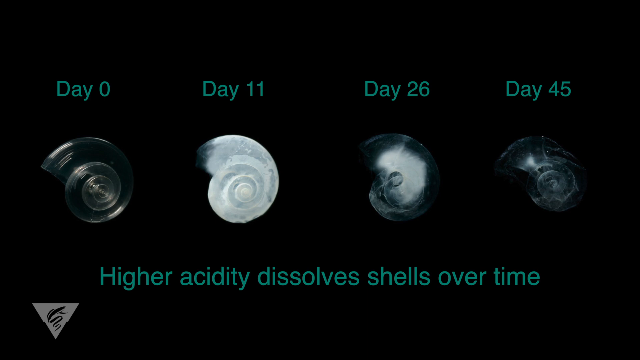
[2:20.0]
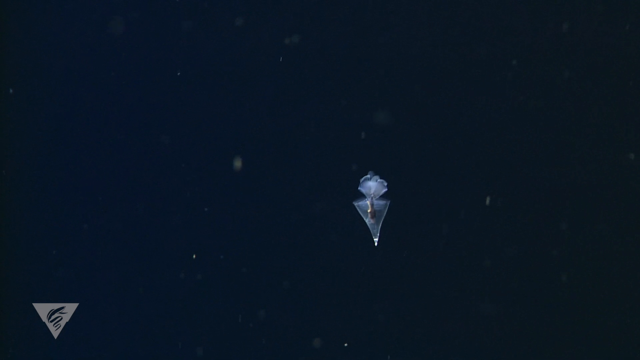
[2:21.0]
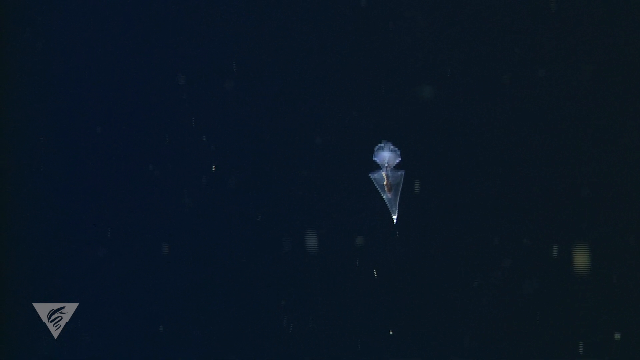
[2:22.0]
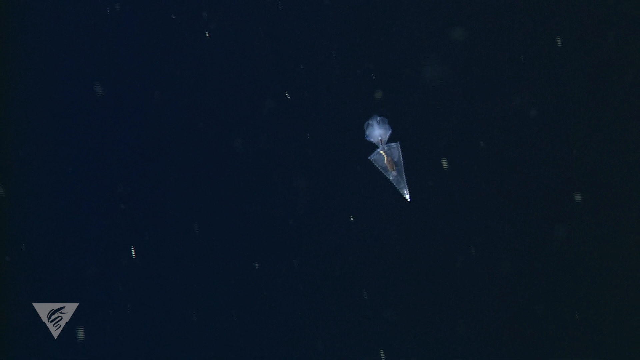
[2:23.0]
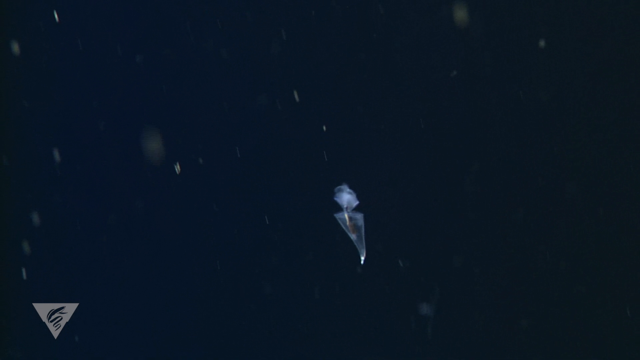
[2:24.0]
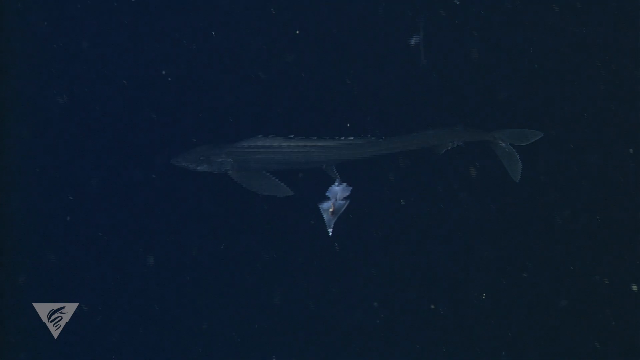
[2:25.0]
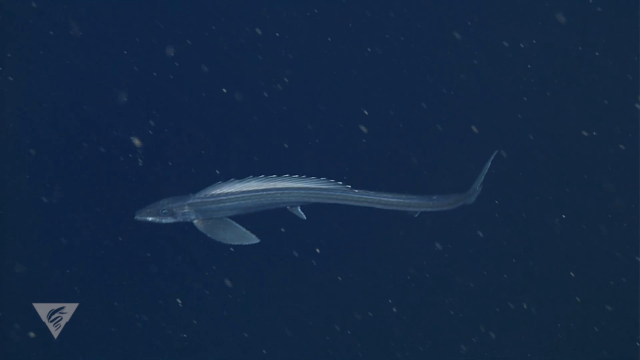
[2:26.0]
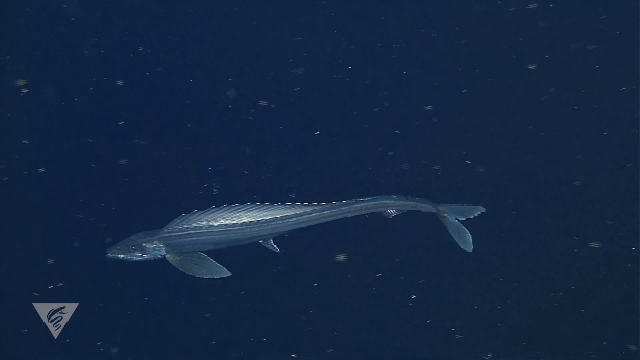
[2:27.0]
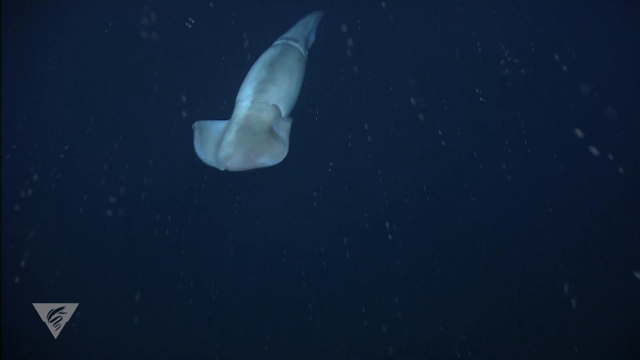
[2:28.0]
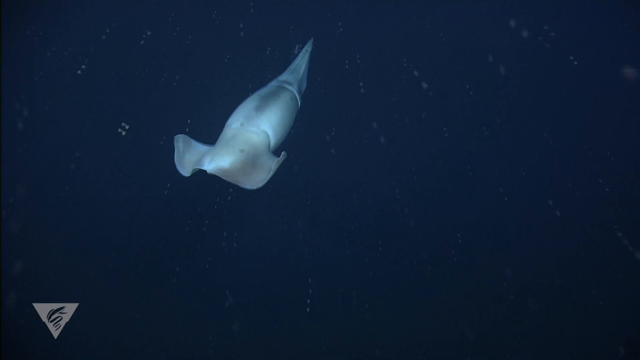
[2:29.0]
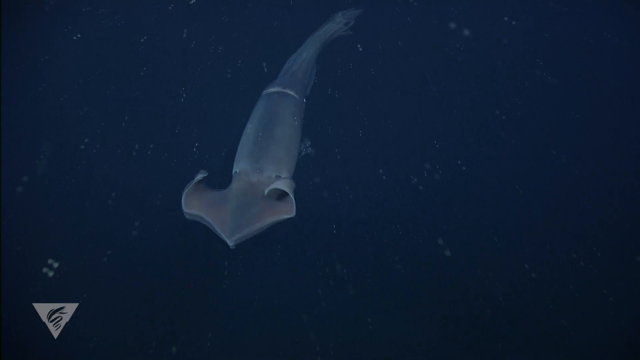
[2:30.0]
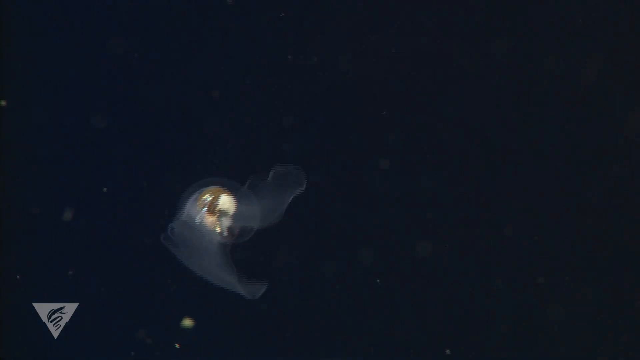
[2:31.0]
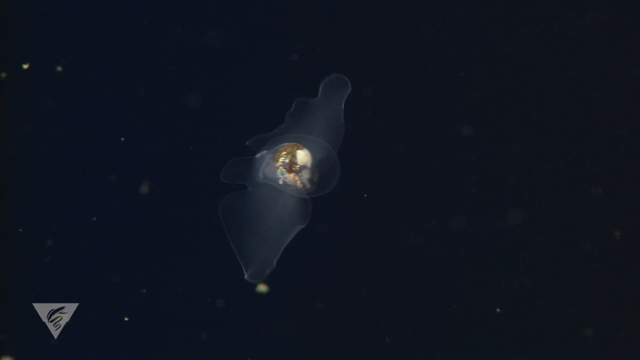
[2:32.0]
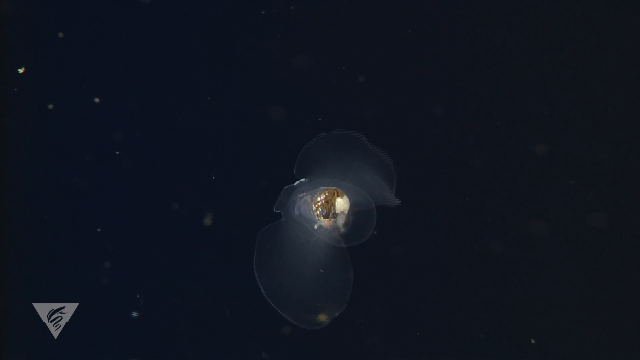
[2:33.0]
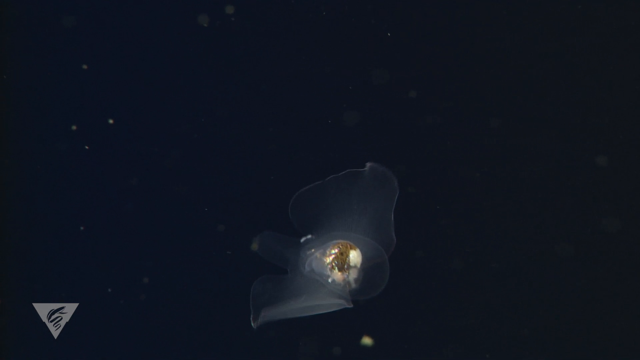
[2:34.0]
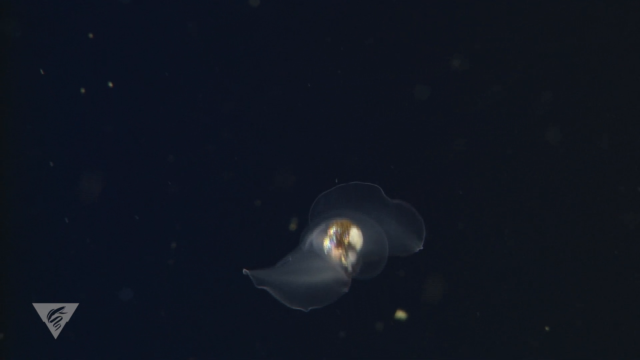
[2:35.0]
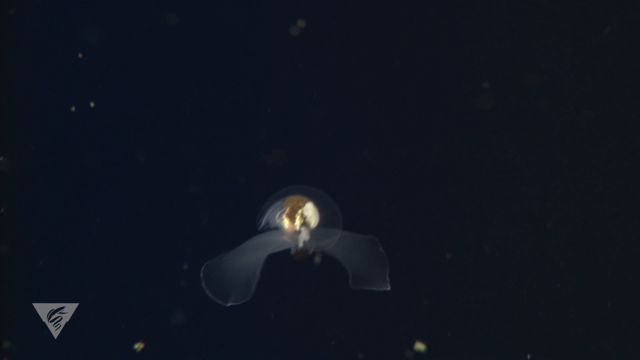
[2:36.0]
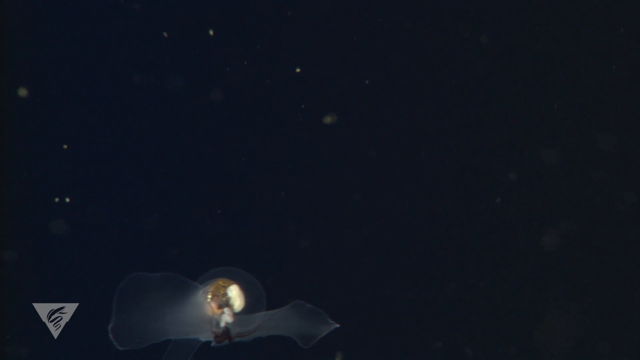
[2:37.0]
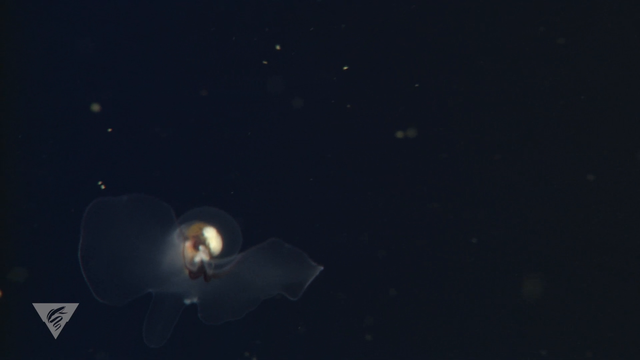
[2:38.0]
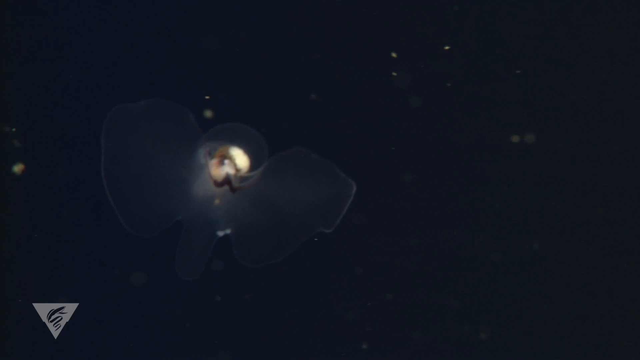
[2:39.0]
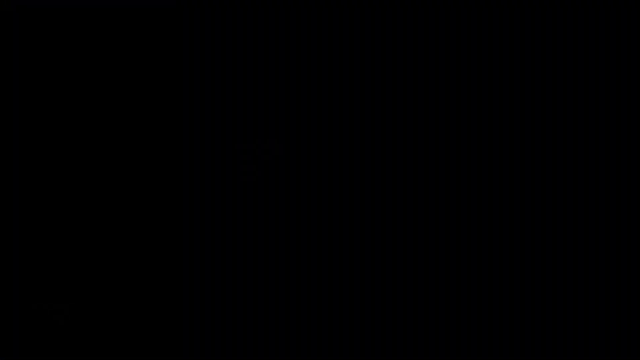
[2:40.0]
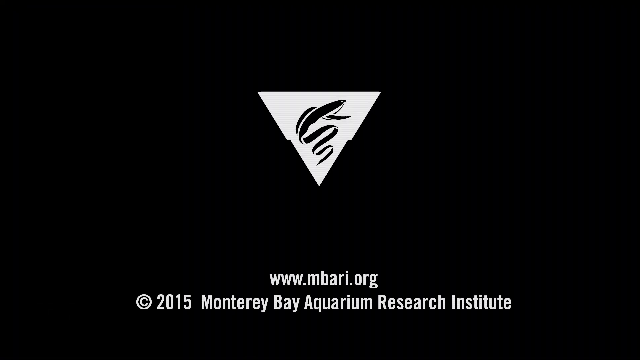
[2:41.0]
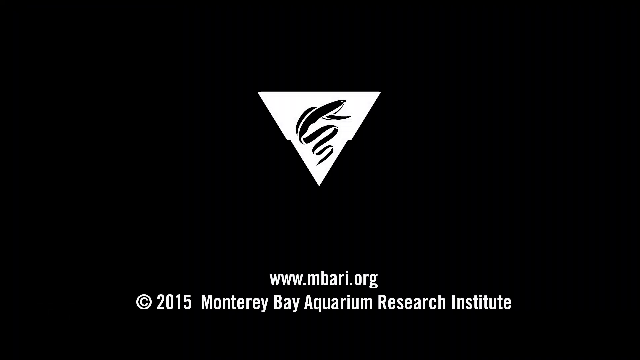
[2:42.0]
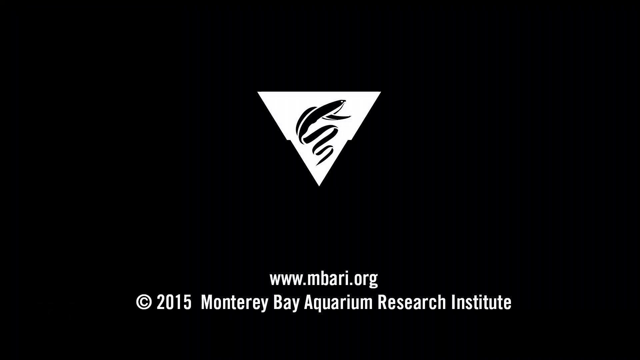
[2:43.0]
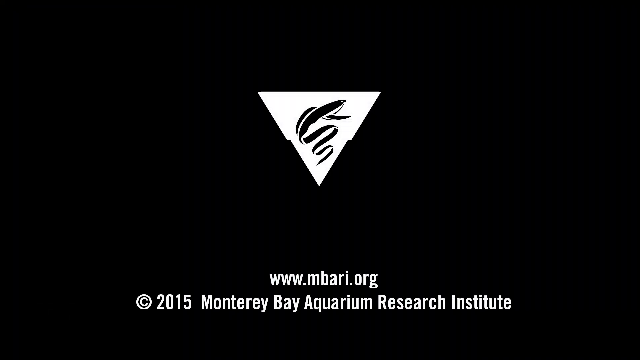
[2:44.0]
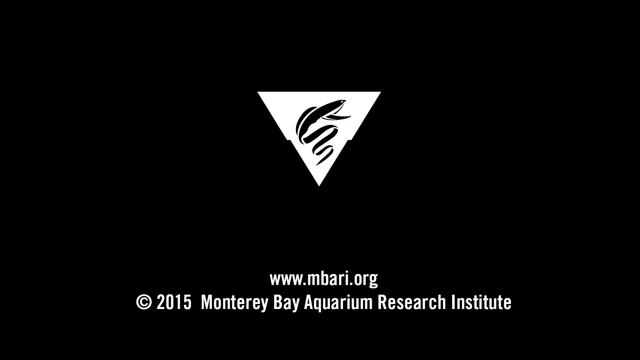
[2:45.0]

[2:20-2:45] The growth cycle shows pteropods beginning life inside a shell in a row of four images. From left to right, the first is day zero, the second is day 11, the third is day 26, and the fourth is day 45. Text underneath reads "higher acidity dissolves shells over time." Pteropods are shown with translucent or opaque bodies, the organs inside still visible, and what look like wings on either side of the body, which are flippers. At one point a squid, a large tubular creature, swims through the ocean.